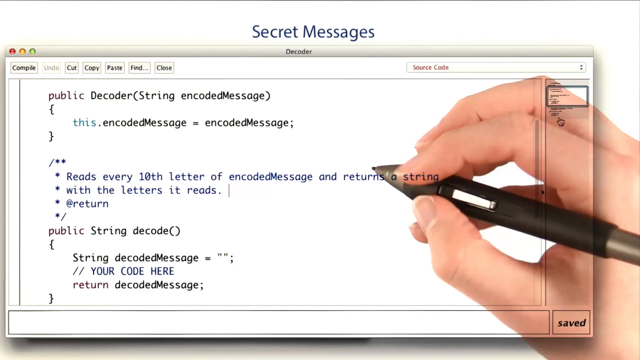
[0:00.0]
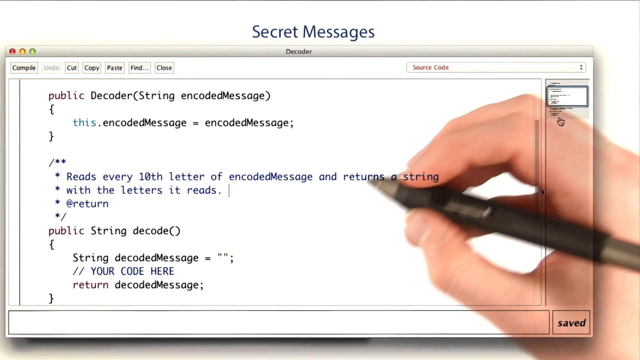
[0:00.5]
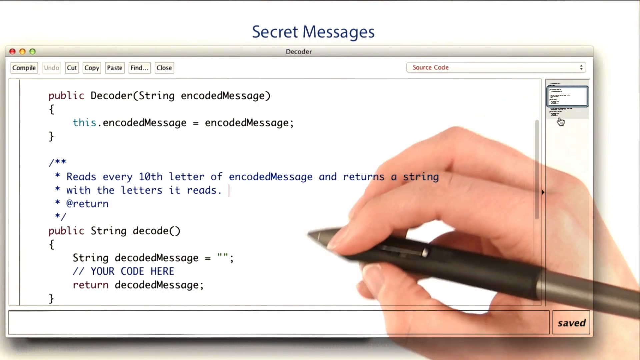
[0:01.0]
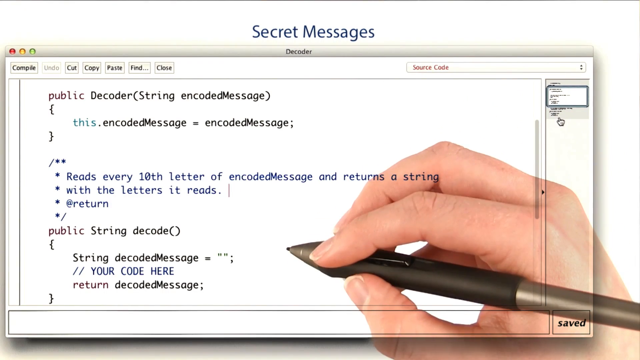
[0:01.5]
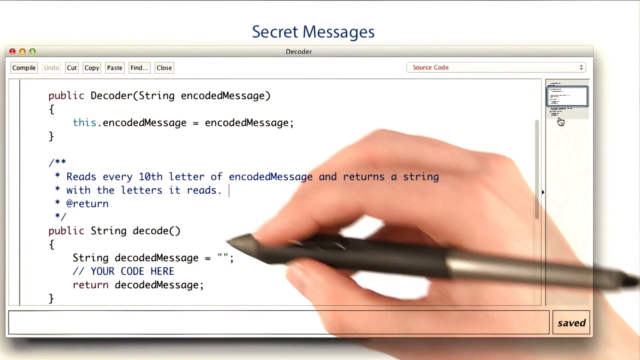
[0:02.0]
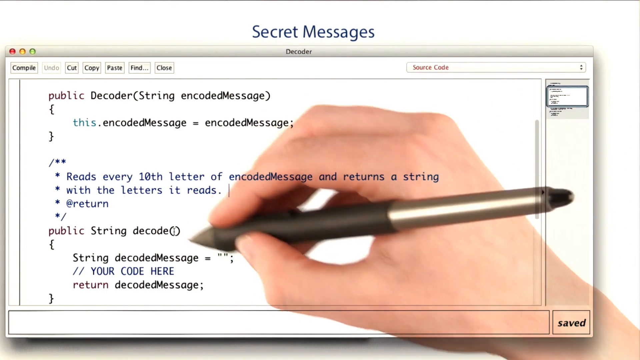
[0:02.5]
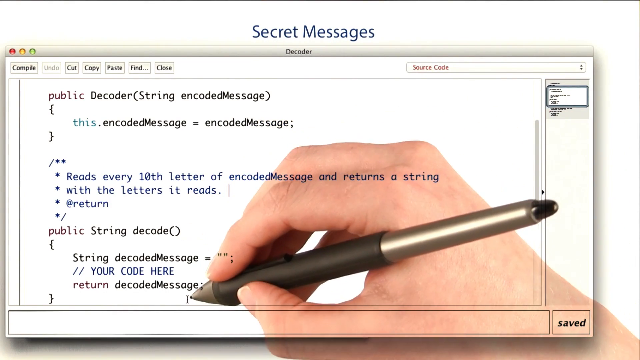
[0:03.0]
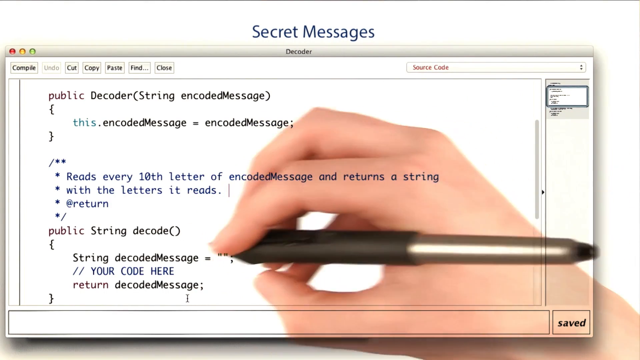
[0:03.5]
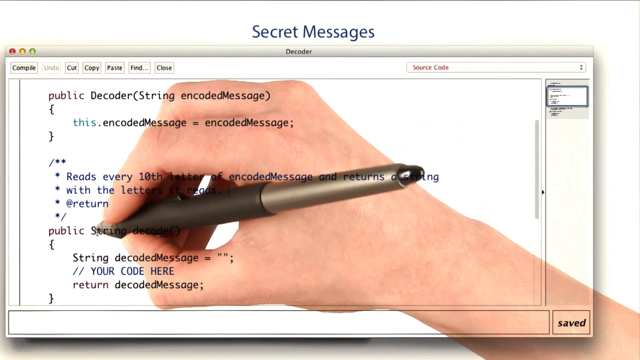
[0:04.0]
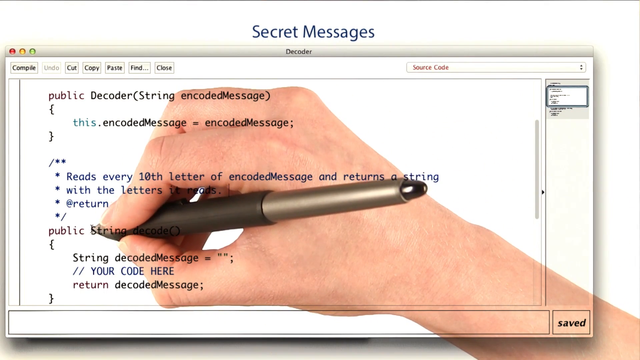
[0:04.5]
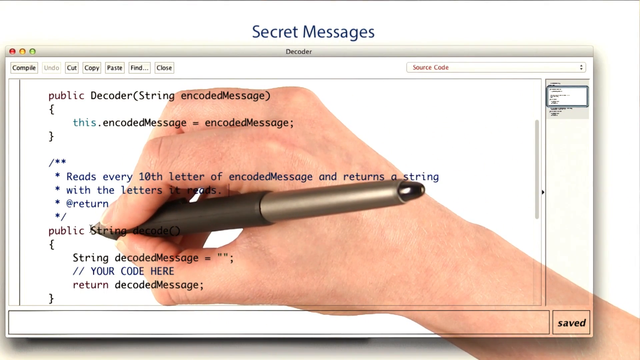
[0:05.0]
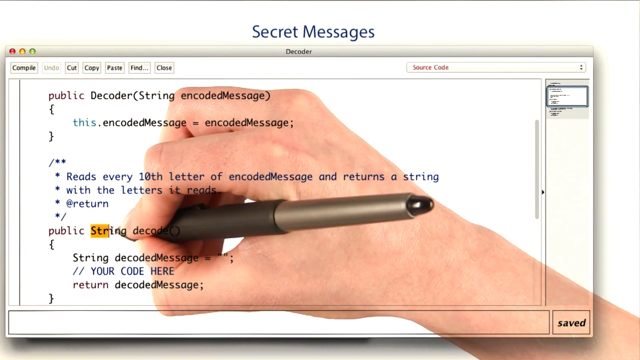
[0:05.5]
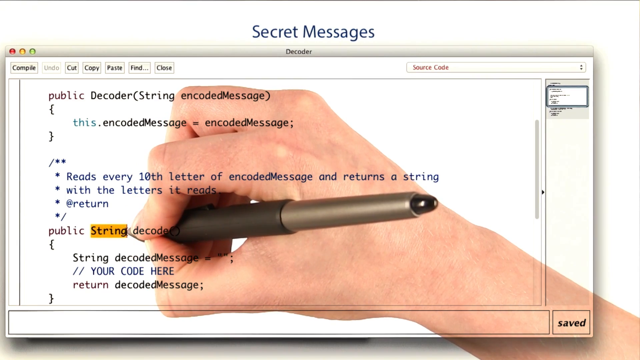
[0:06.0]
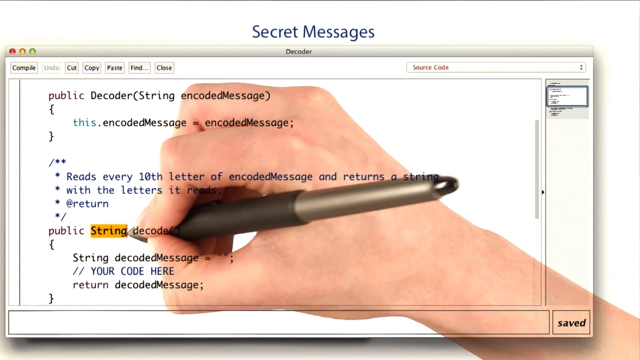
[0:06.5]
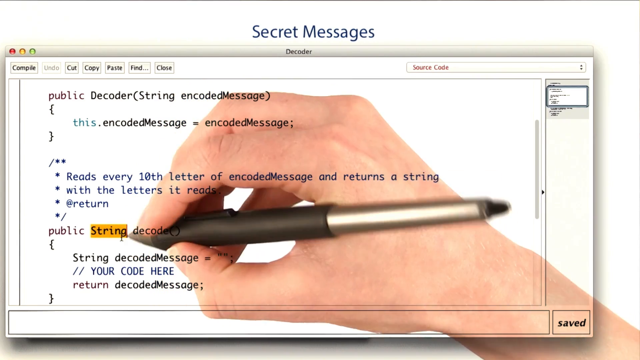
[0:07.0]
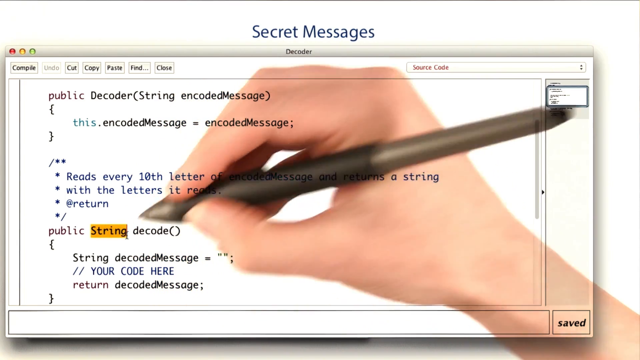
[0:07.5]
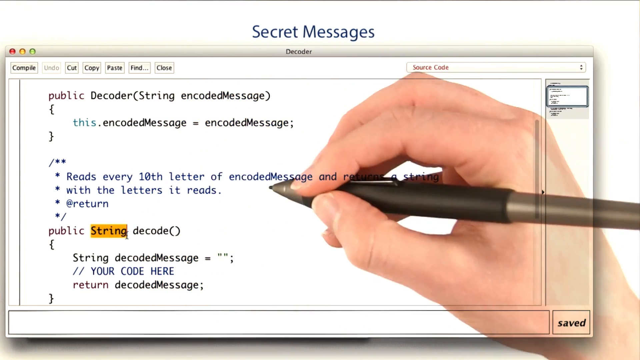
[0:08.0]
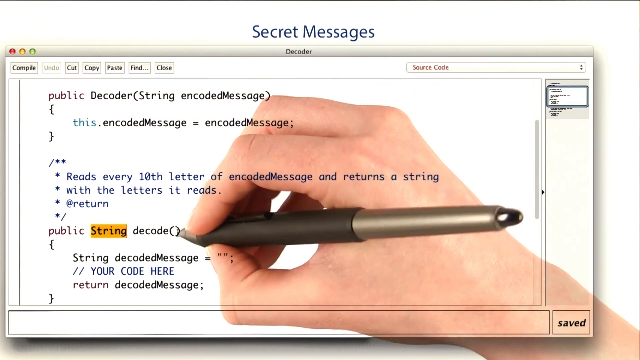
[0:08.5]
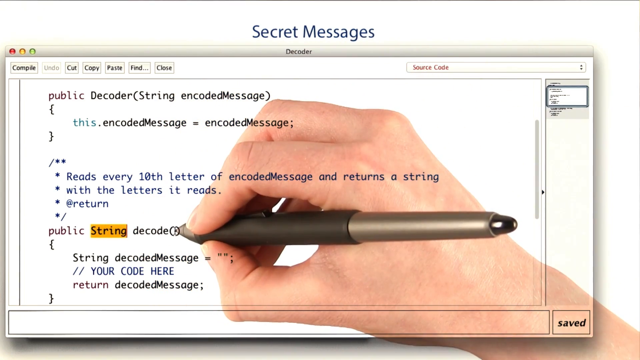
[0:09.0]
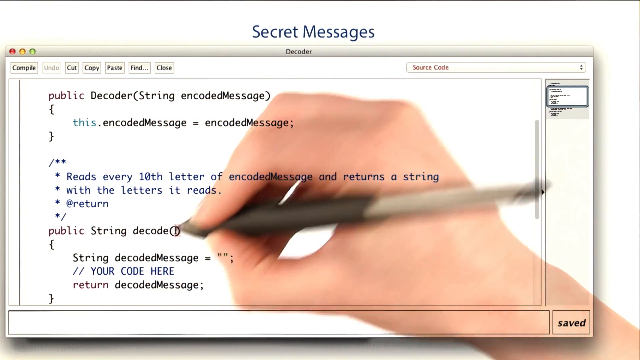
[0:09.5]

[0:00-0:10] The screen displays what looks to be code reading "public decoder string encode message", "this encoded message equals encode message", "reads every 10th letter of encoded message and returns a string with letters it reads at return public string decode string decode message", "// your code here" and "return decoded message". This is written on a decoder page on an Apple Mac laptop. On the top left it says "compile cut copy paste find close". On the right side there appears to be an image of a hand holding a black pen. In the background on the top right it says "source code".